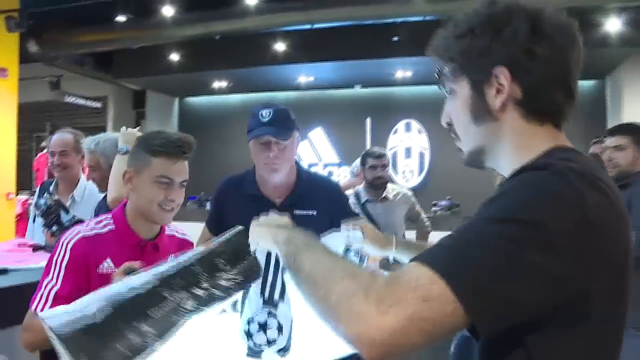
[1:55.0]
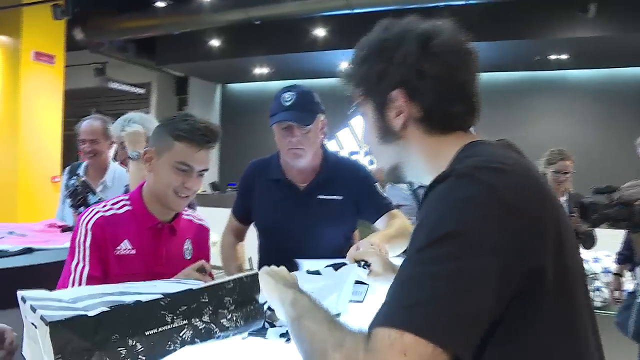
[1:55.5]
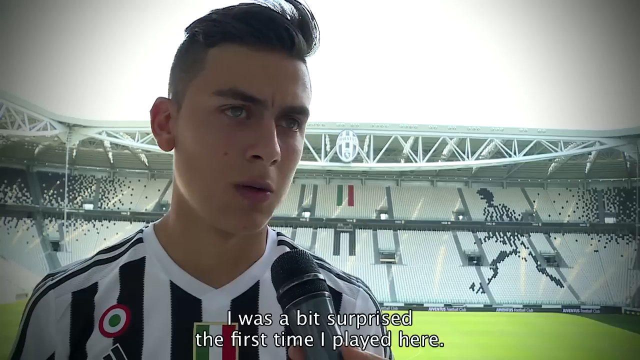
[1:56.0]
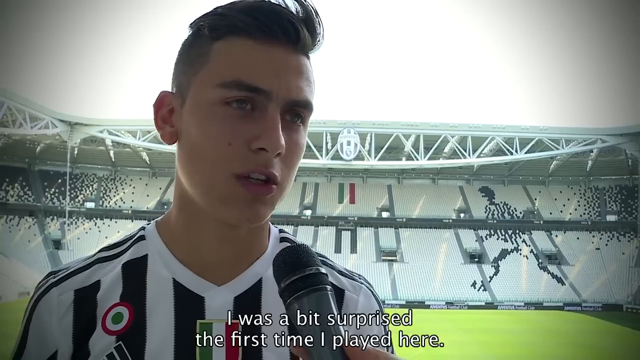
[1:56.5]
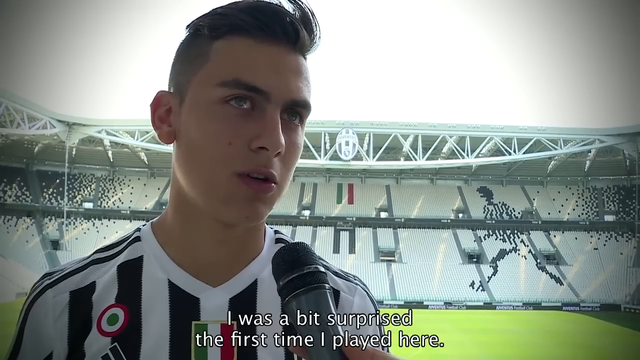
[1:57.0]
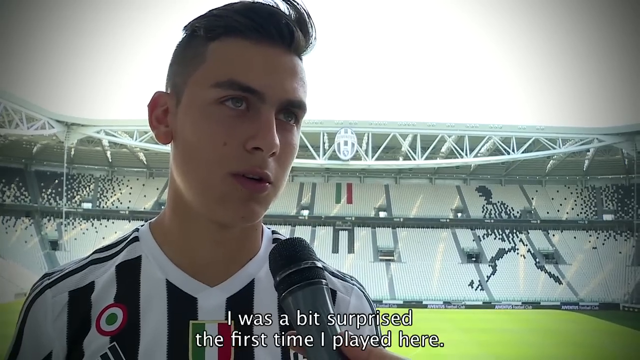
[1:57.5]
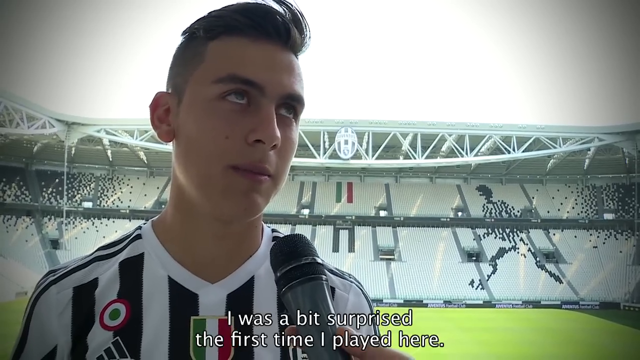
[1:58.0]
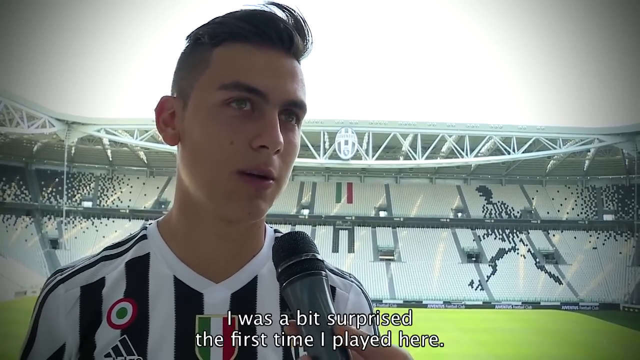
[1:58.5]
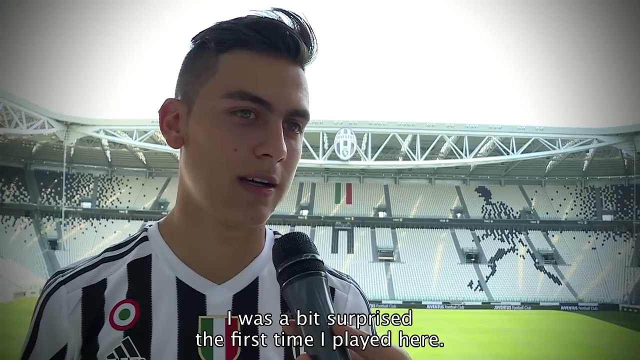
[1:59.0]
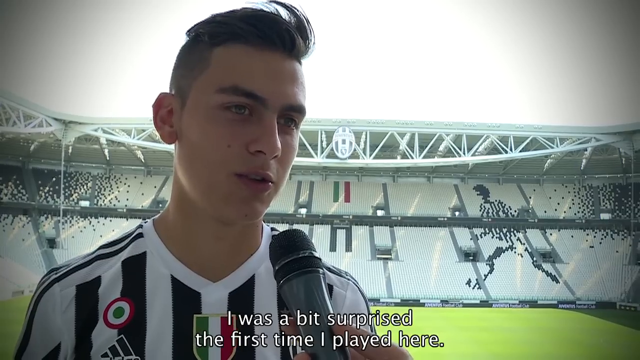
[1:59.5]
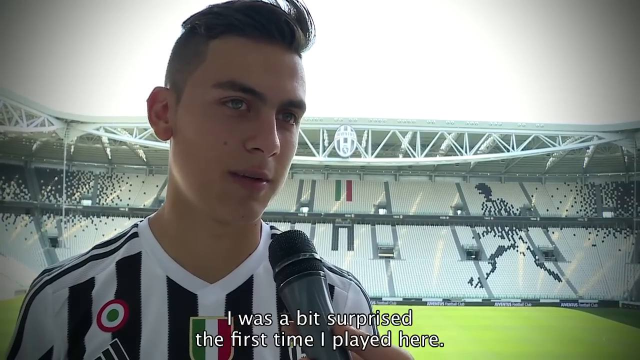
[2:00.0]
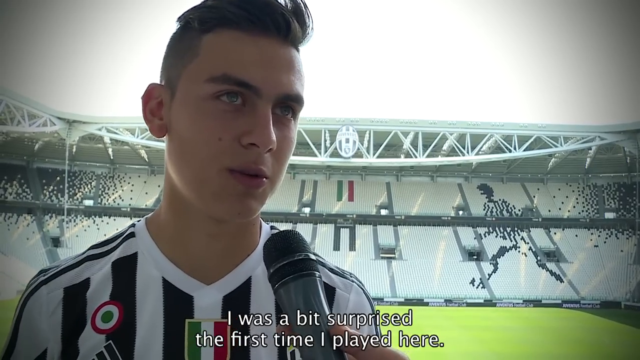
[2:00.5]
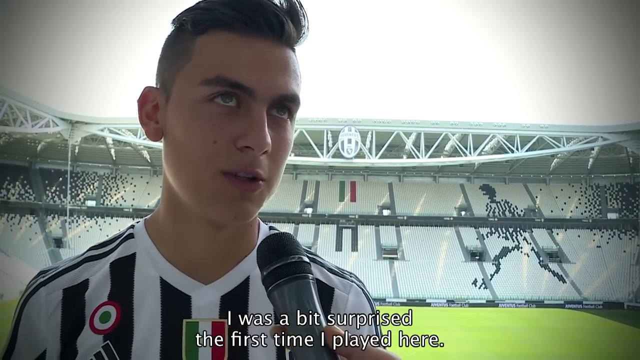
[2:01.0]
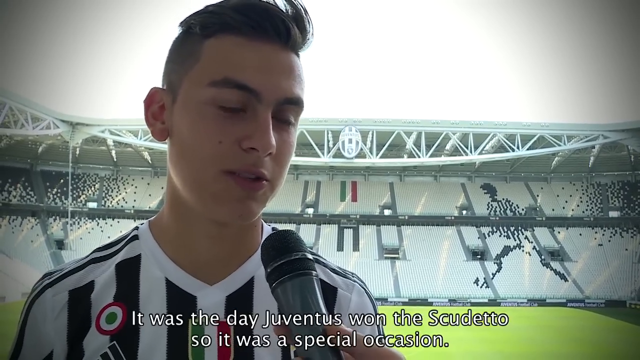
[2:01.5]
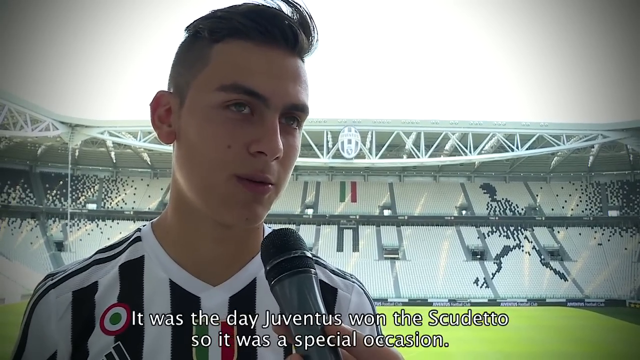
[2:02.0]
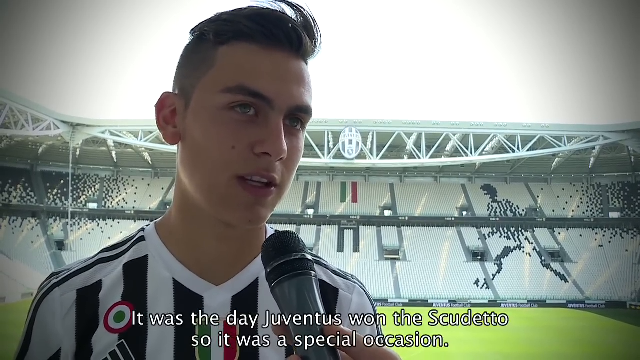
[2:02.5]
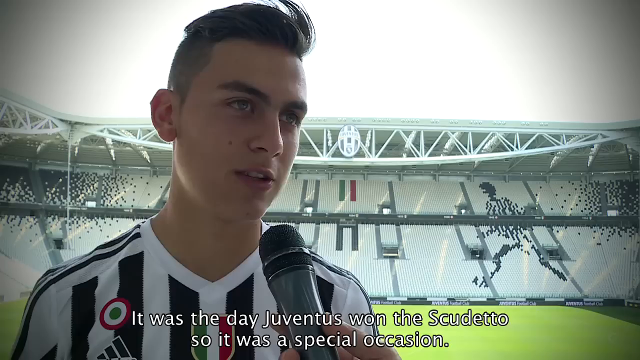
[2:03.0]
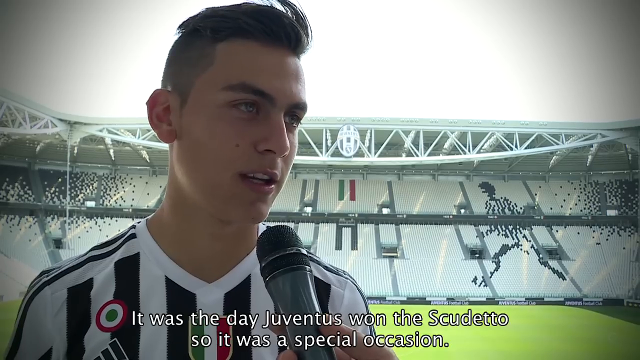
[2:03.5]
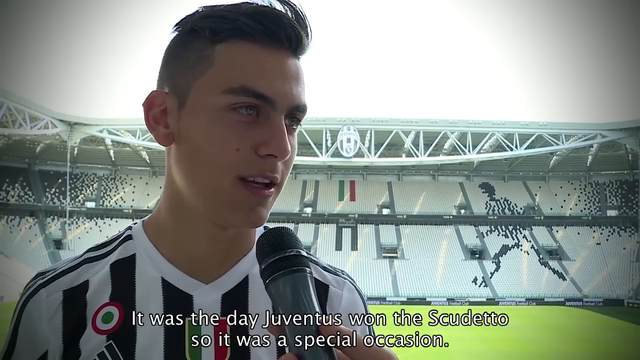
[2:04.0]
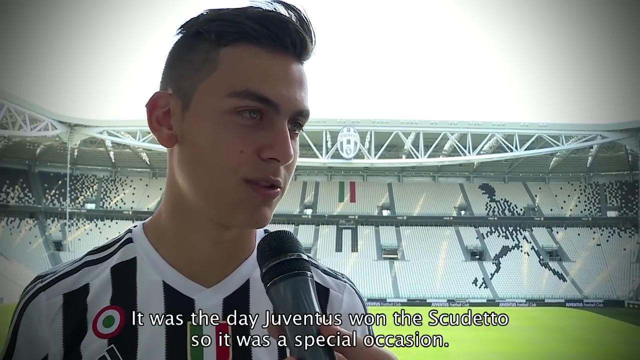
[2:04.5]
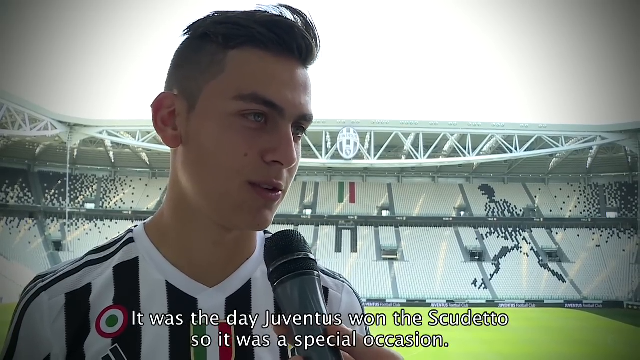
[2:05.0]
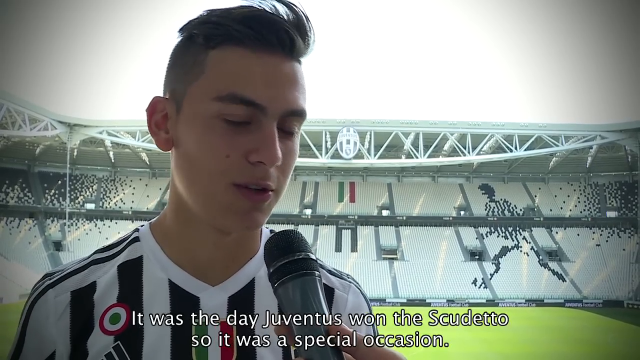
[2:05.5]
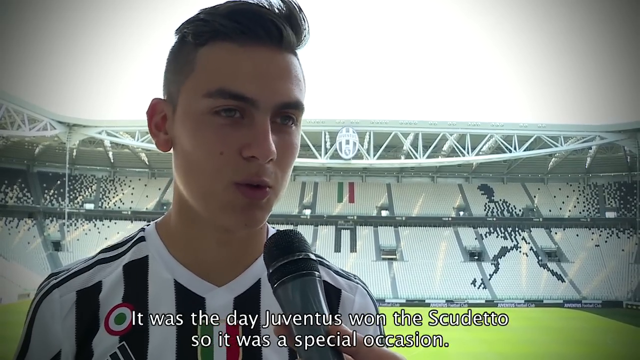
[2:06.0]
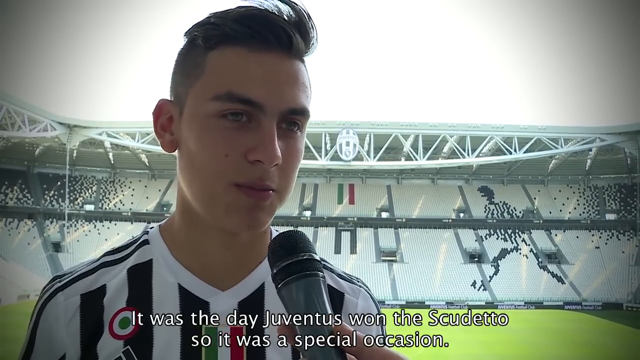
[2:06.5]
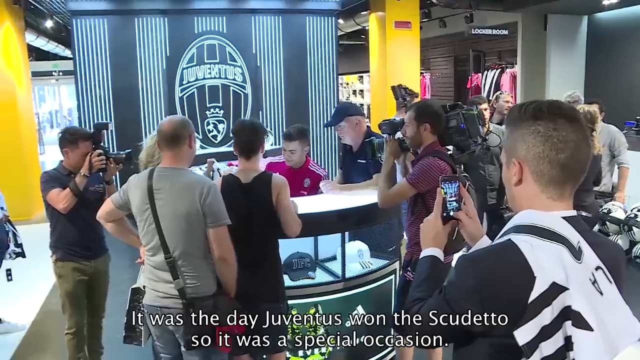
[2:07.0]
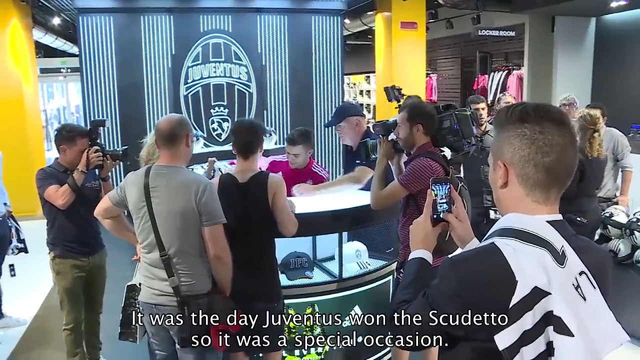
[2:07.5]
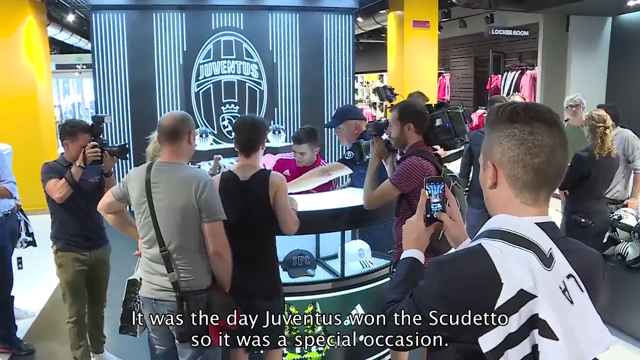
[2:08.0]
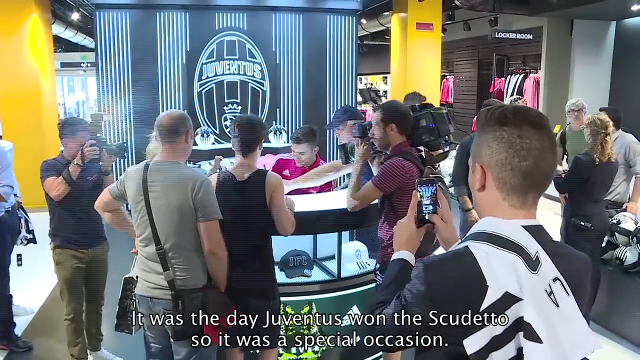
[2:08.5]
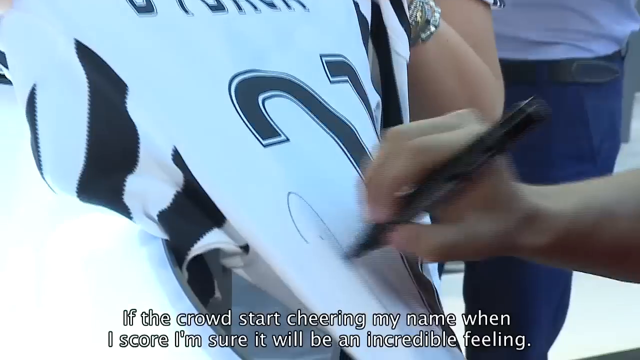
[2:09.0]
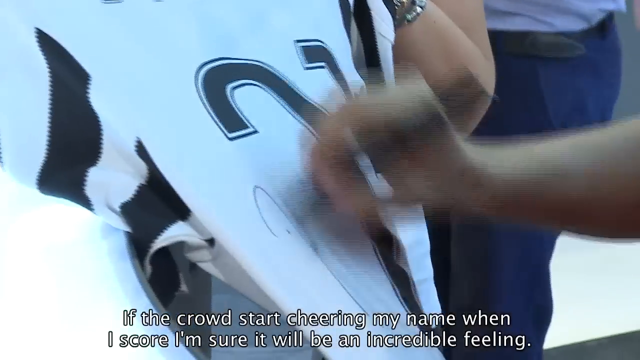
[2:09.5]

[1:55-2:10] Paolo keeps signing jerseys as a security guard on staff grabs a jersey from the fans, and guests talk with him one-on-one while he signs. He then appears in a different interview at the Juventus Stadium in daylight, with the sky visible and sun rays reflecting off the seats. He appears to have his jersey on as he speaks. The video returns to him signing more jerseys for supporters while cameras and videographers take pictures and videos of him. What appears to be a small family gets their jerseys signed by Paolo.